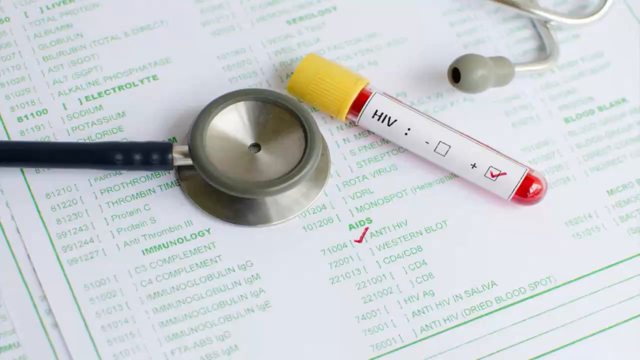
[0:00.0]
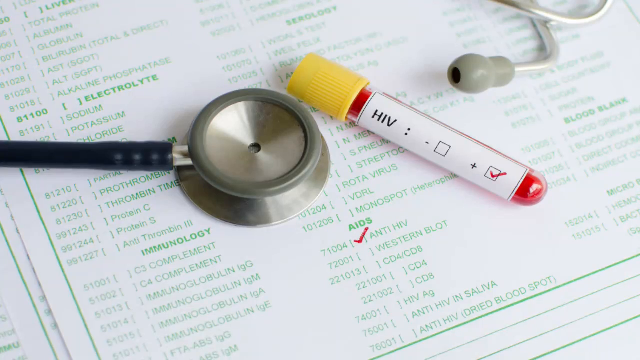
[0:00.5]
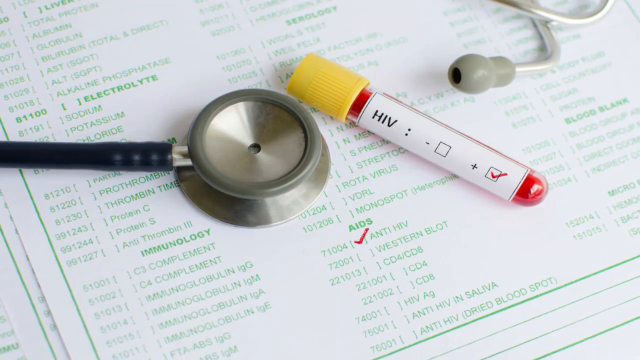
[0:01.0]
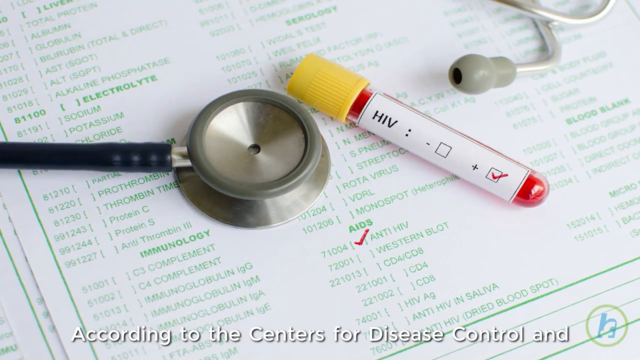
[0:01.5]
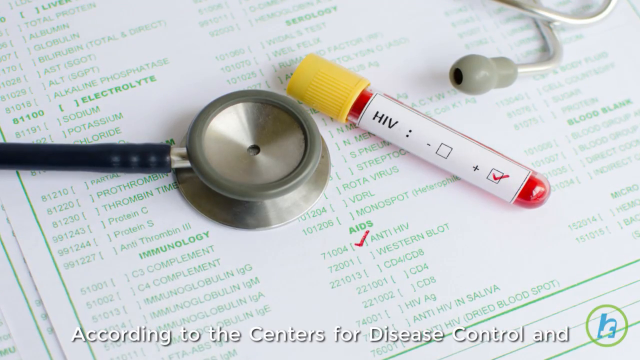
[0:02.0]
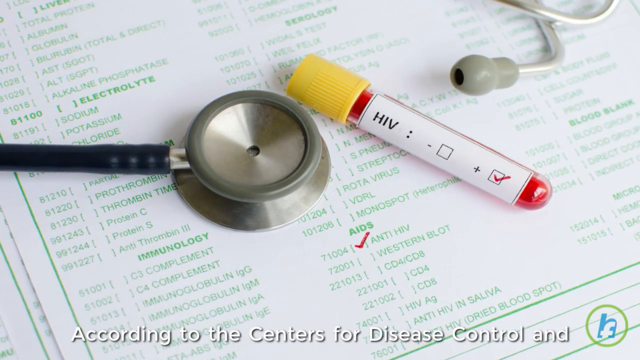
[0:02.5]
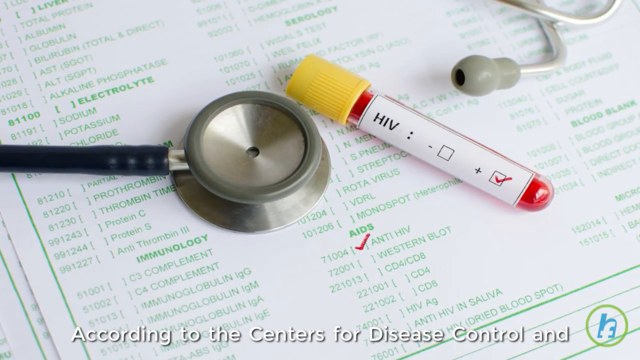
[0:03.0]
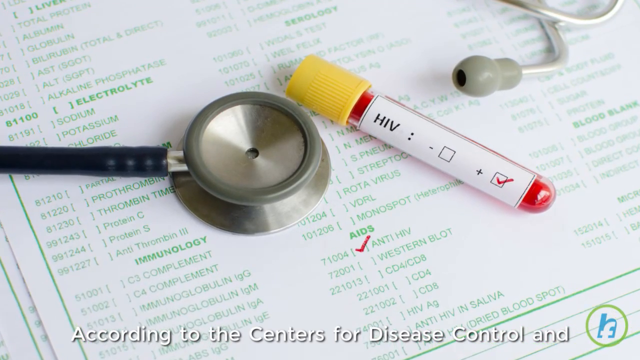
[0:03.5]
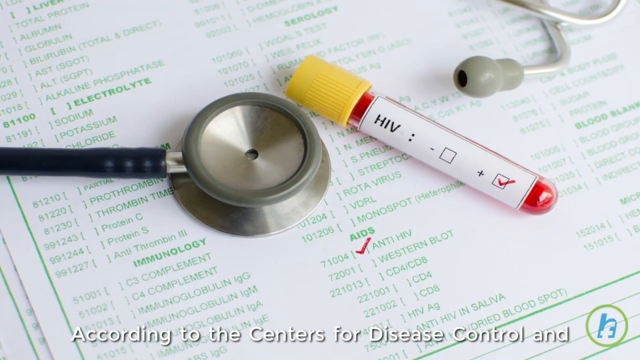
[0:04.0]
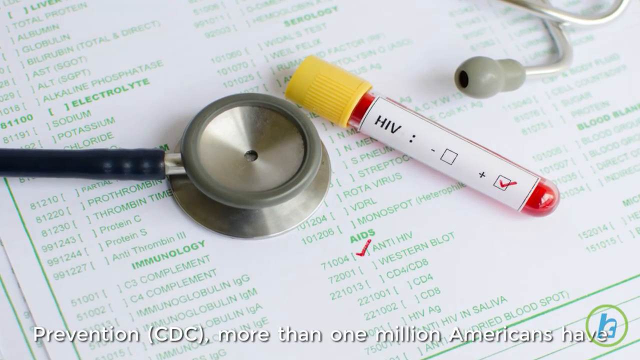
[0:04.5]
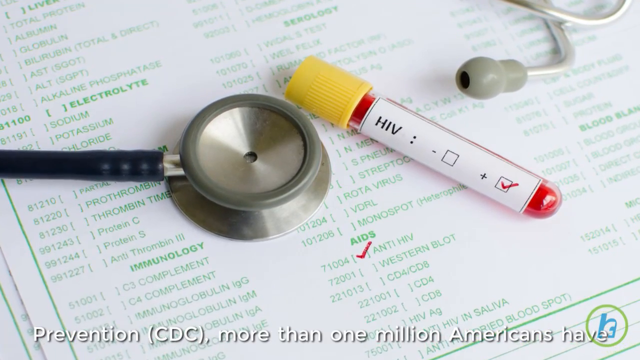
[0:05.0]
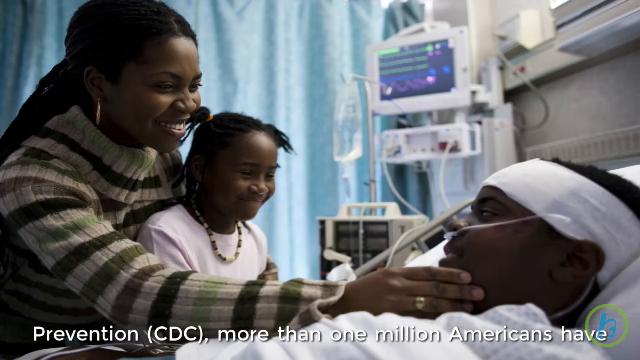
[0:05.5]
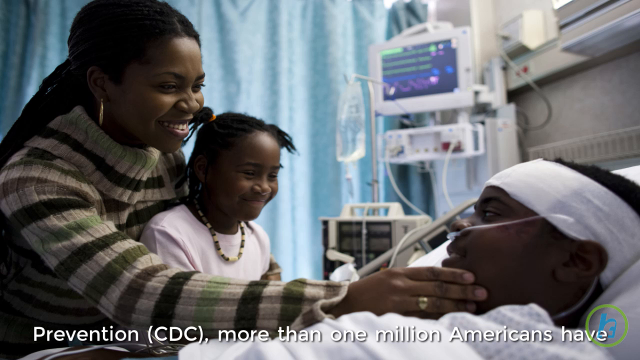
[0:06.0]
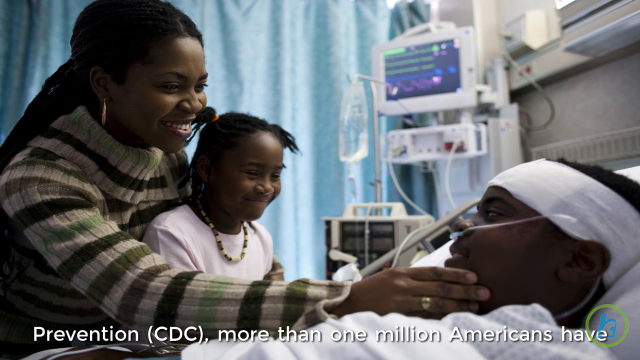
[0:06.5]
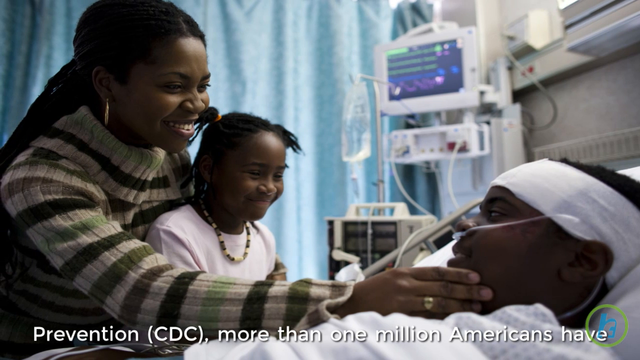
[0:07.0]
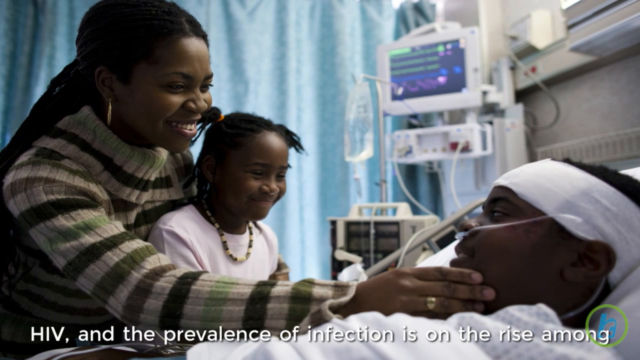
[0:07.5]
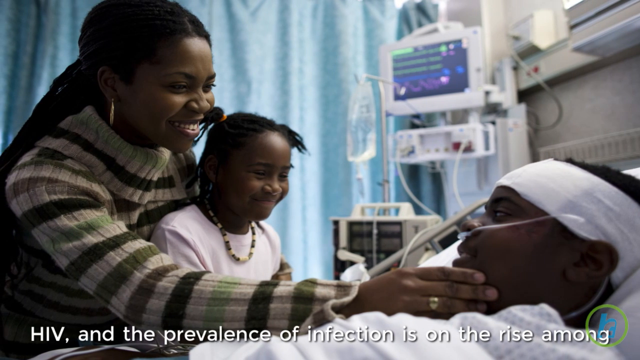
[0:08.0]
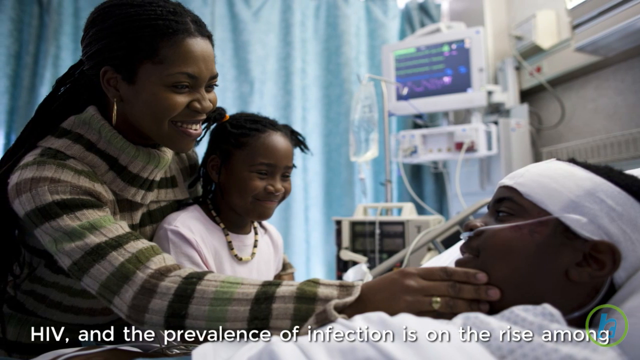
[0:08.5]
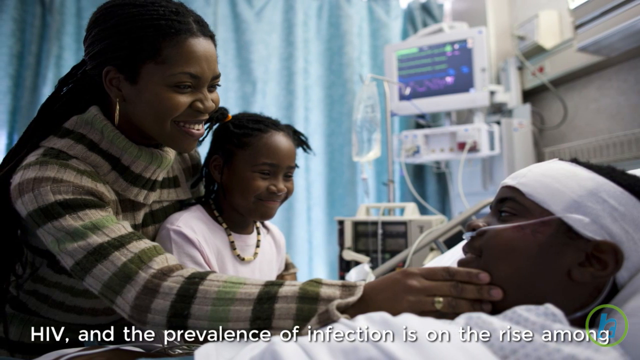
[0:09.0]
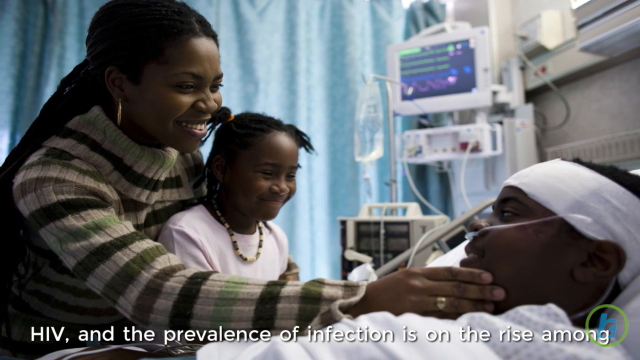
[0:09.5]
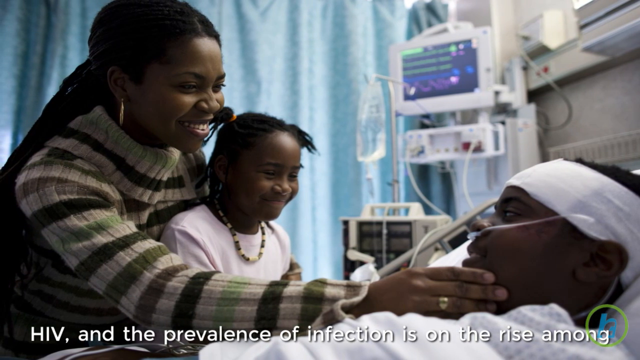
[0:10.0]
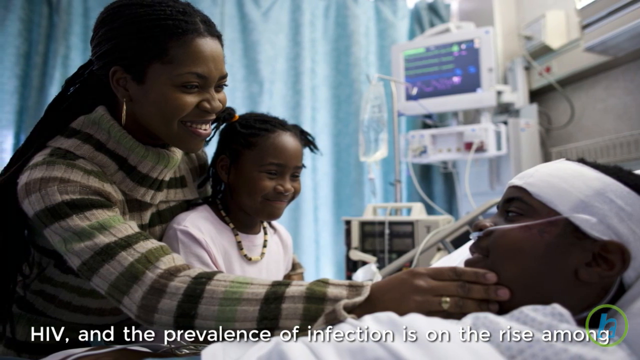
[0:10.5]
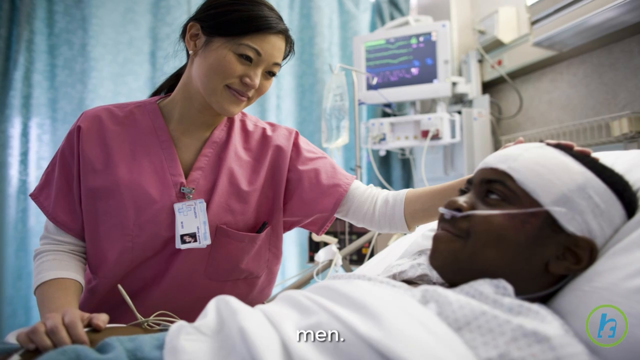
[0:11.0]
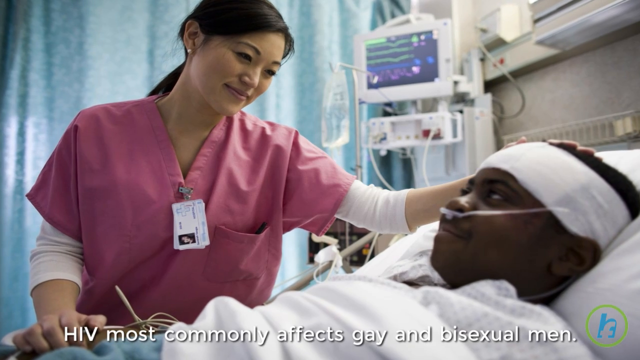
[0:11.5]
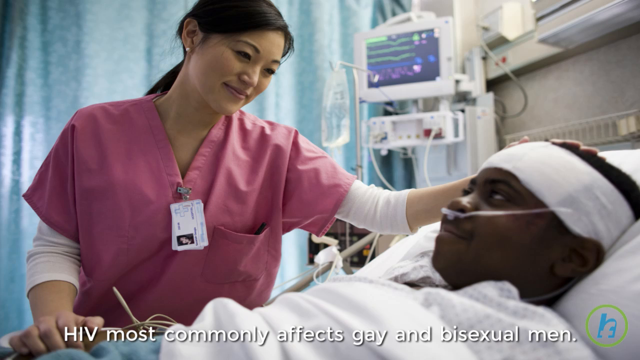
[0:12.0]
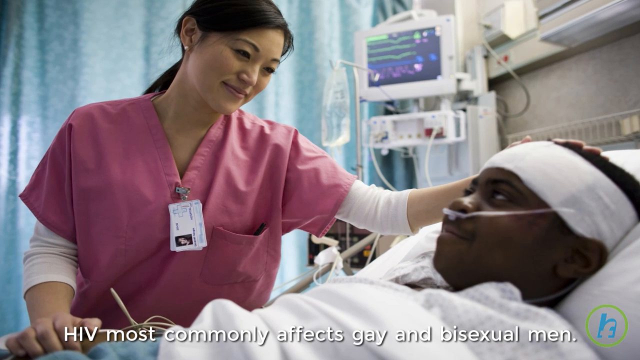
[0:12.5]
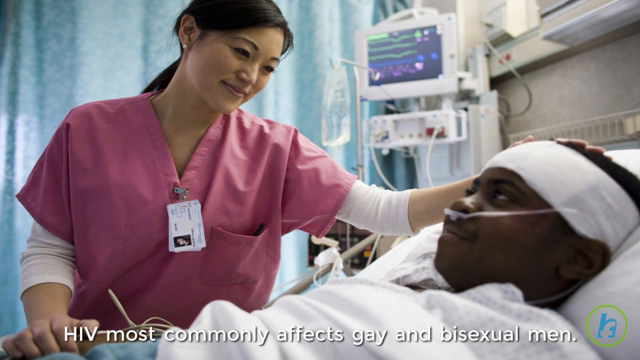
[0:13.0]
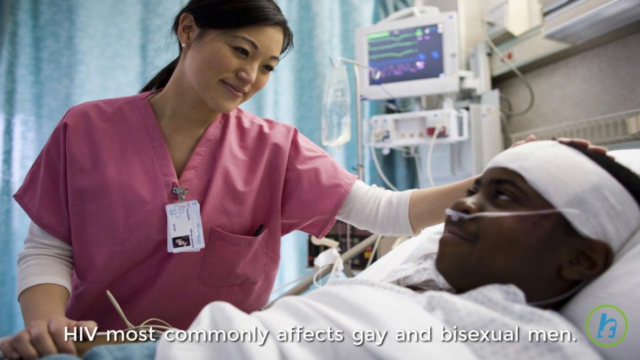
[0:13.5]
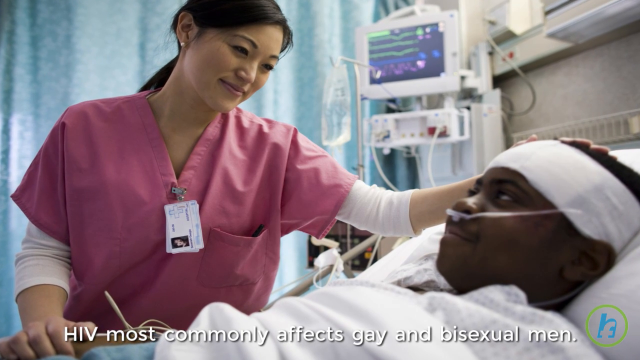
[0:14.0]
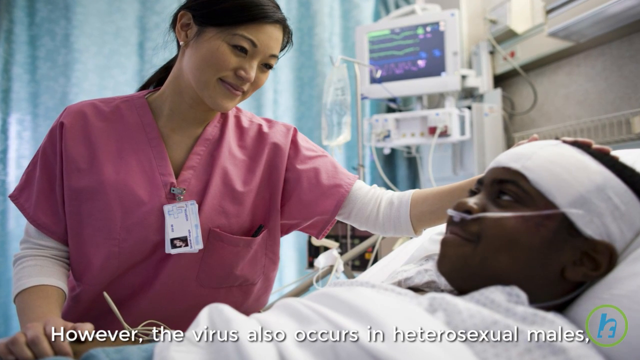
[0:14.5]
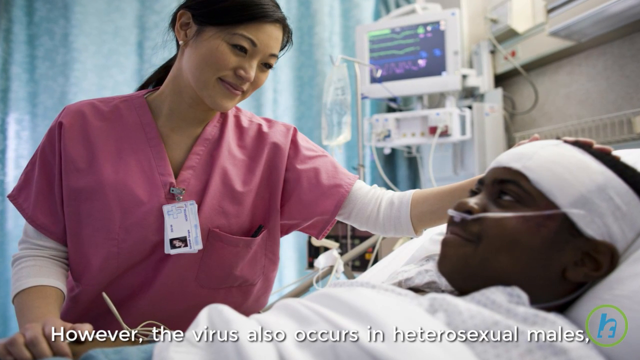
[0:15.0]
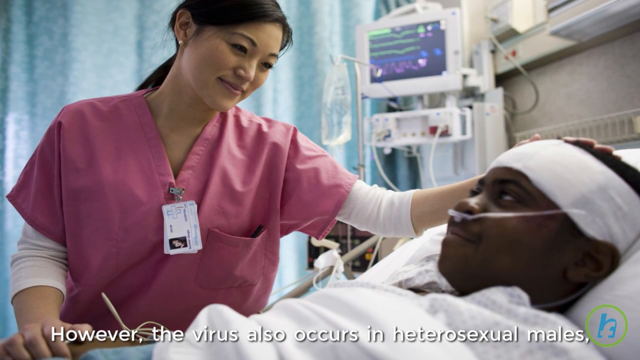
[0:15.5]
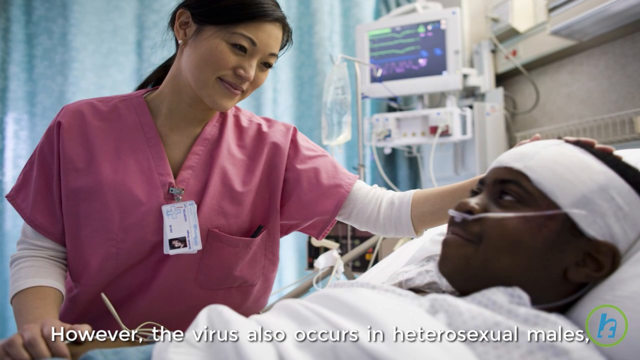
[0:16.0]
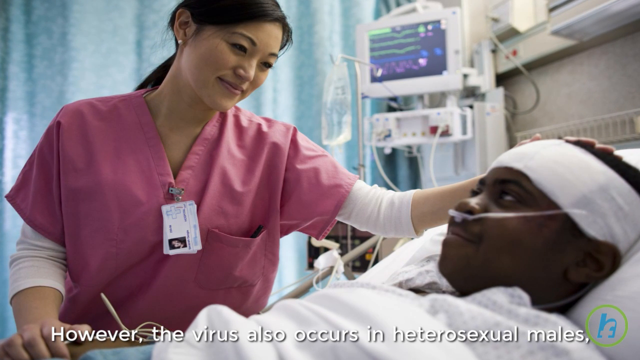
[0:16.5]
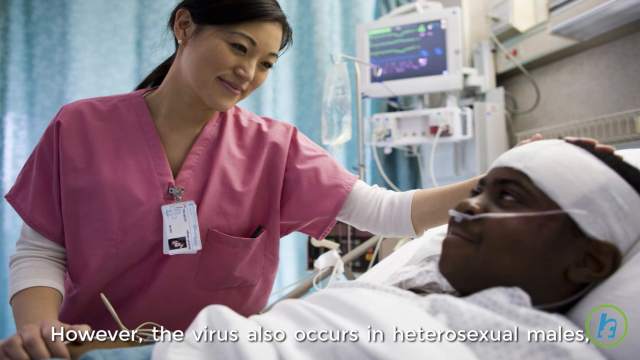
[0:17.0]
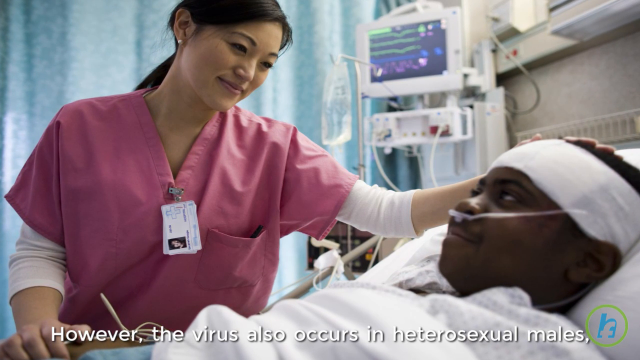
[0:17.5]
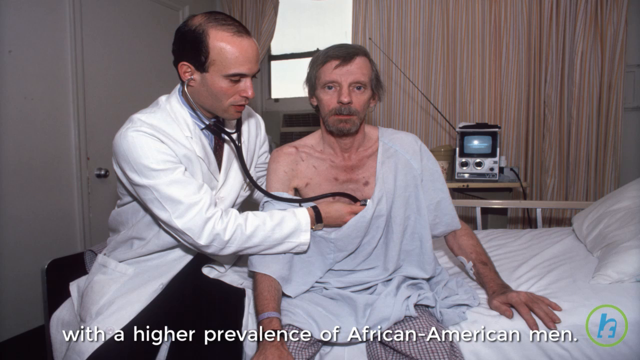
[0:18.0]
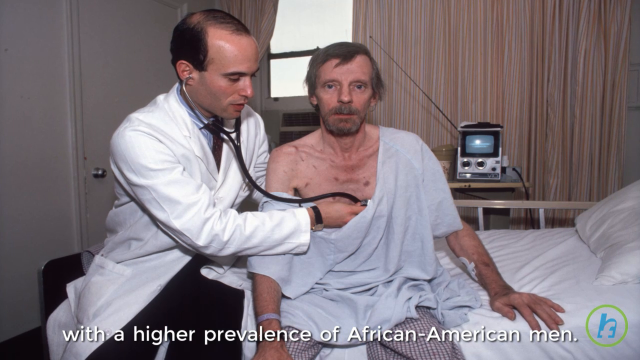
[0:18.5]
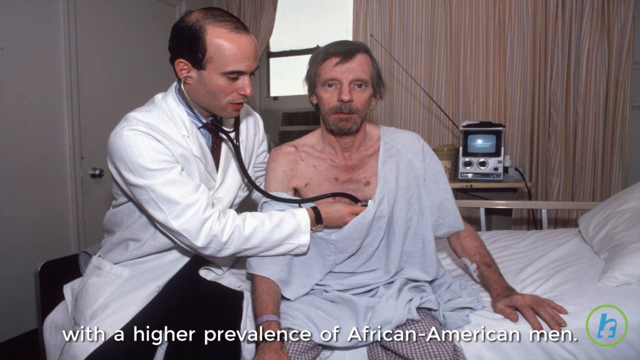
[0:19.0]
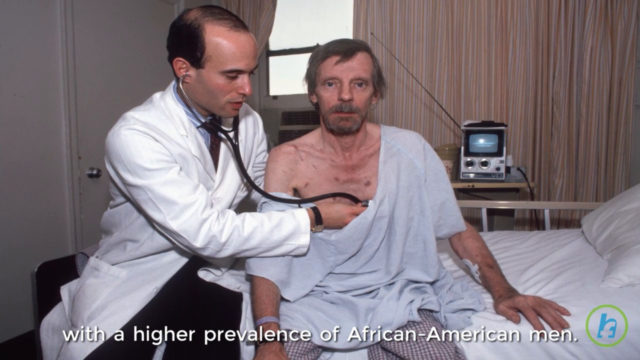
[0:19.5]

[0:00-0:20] A stethoscope is lying on top of a piece of paper with a lot of writing on it. Next to the stethoscope is a vial of blood with the word "HIV" on it. The camera sort of drifts closer to the two objects. The view then changes to a different still photo of a hospital room. An African American patient is laying in the hospital bed with a big white cloth around his forehead and oxygen going to his nose. Next to him is a woman of the same age who appears to be maybe his wife, with a little girl in her lap; they are sitting next to his bed. The mother has her right arm extended, her fingers touching his lower left chin, and both she and the little girl are smiling. Another still photo follows, showing the same man in the hospital bed with the oxygen, this time with a nurse next to him.